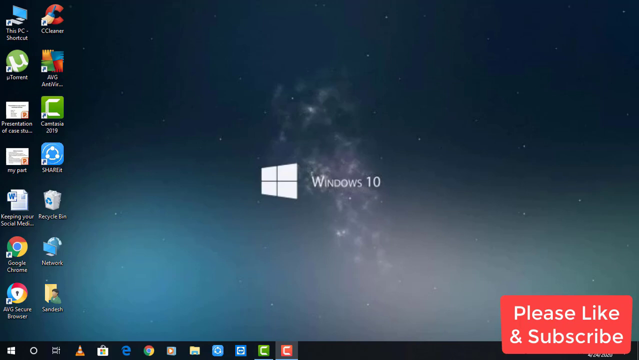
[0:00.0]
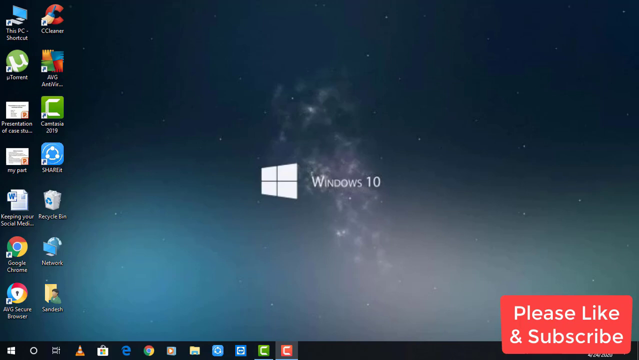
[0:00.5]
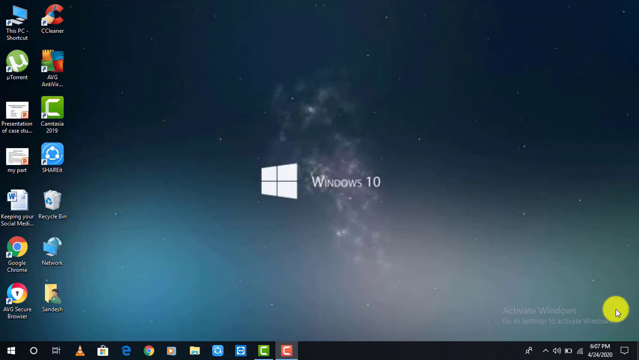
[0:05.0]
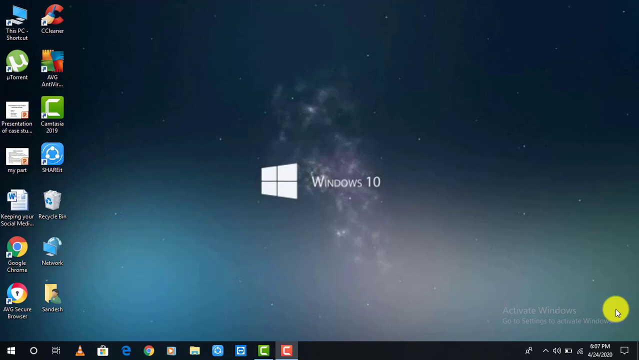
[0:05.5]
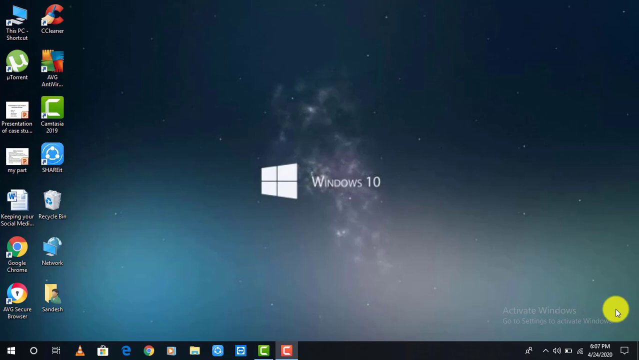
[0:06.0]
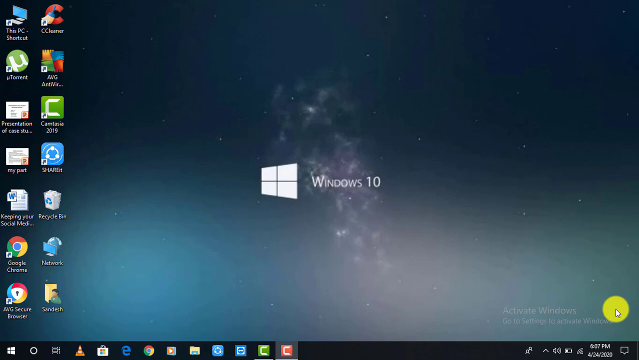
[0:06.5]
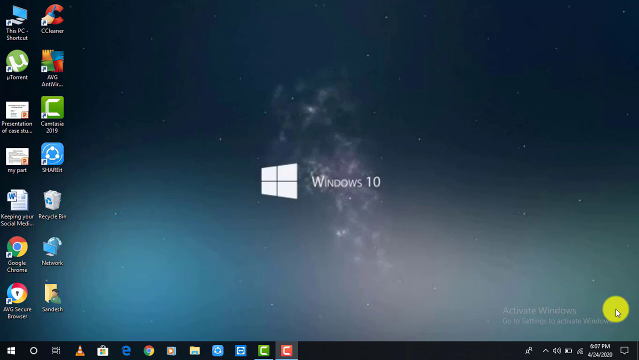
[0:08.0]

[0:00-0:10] It looks like someone is recording their computer screen. The background resembles a galaxy with stars in it, and the Windows 10 logo is on it. Apps are on the left side, and at the bottom right the text reads "please like and subscribe." A black bar along the bottom shows the home button, and Internet Explorer and Google are visible. On the right of the bar are the battery level, the Wi-Fi in use, whether the volume is on, and the time, which appears to be 6.07 PM, 4-24-2020.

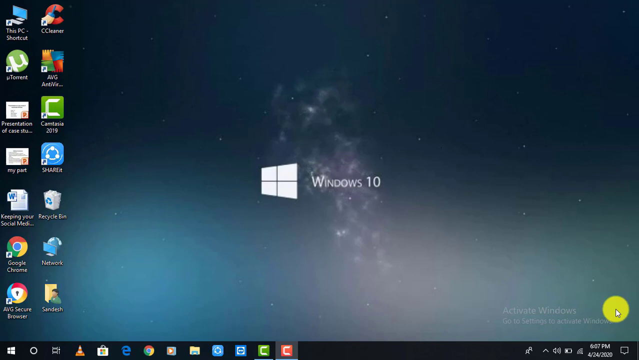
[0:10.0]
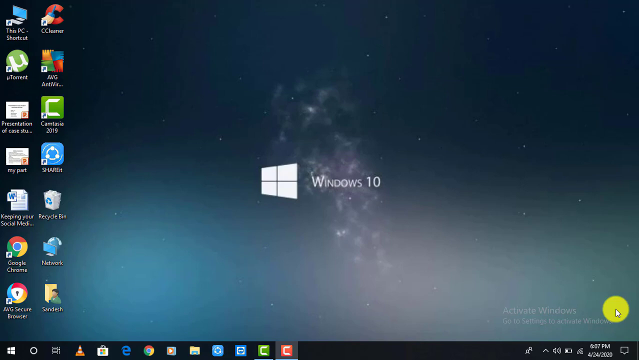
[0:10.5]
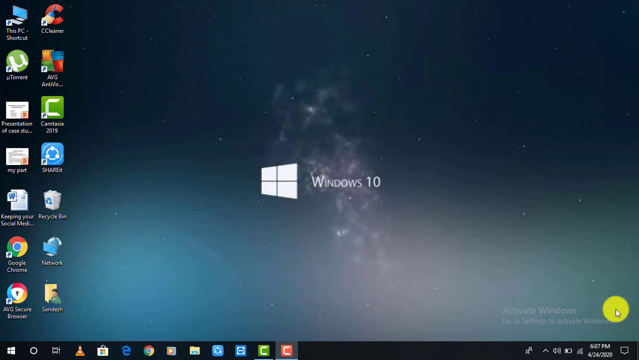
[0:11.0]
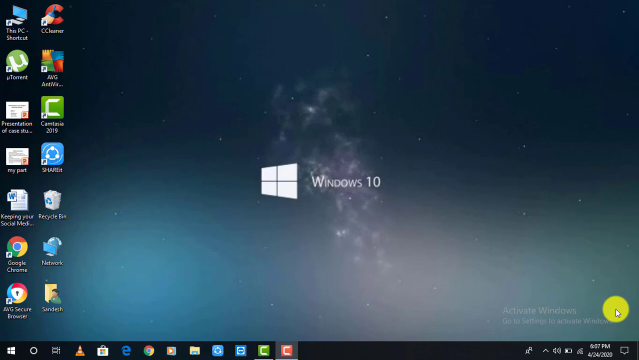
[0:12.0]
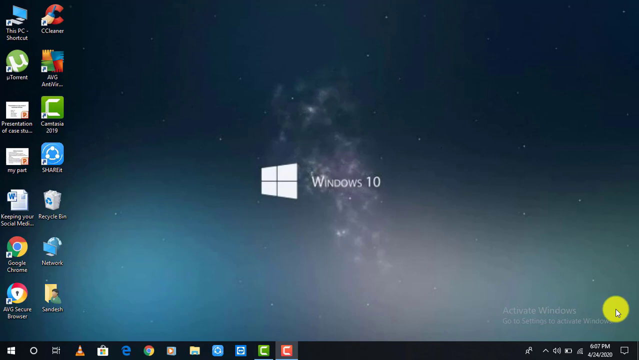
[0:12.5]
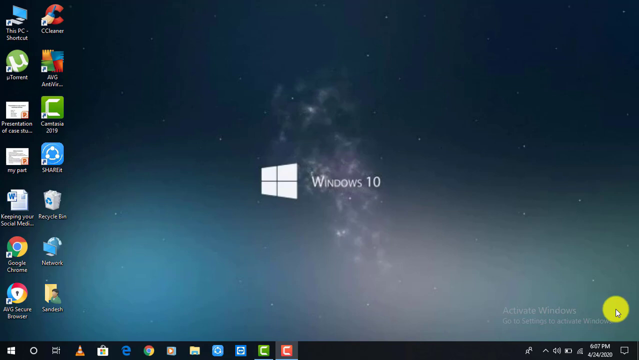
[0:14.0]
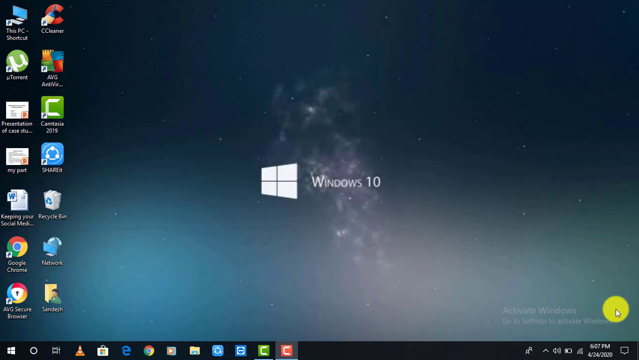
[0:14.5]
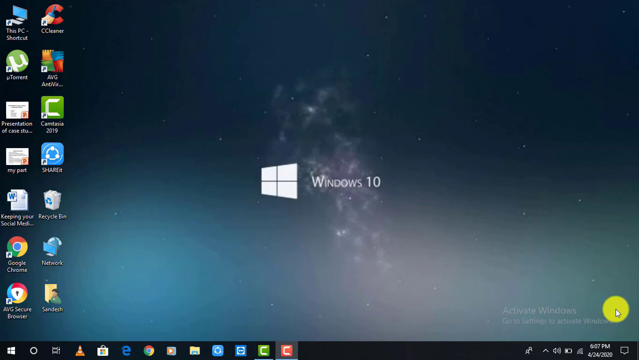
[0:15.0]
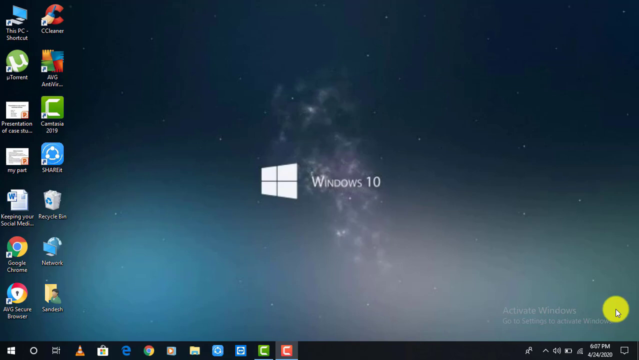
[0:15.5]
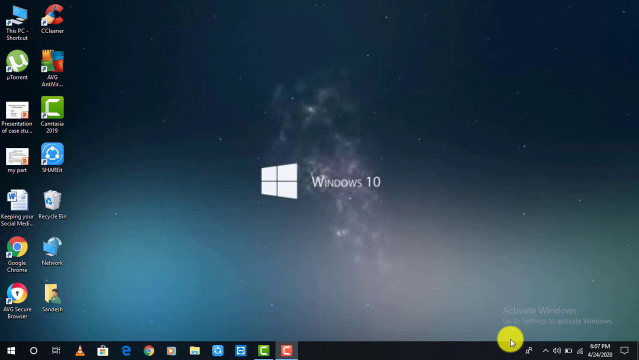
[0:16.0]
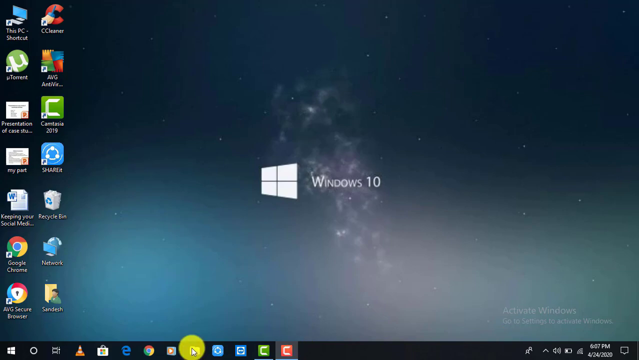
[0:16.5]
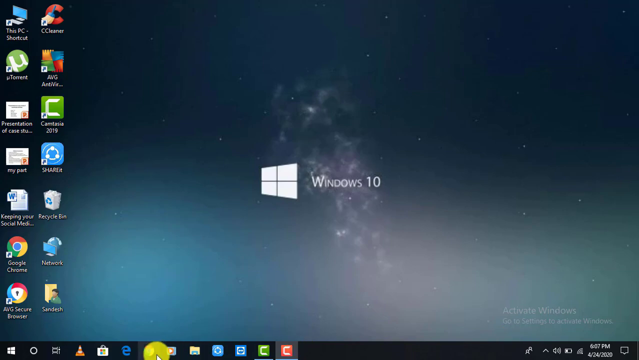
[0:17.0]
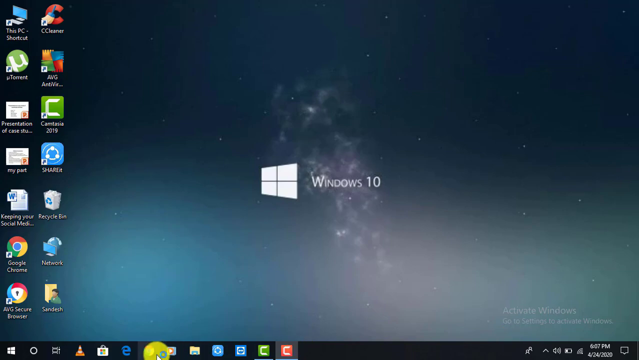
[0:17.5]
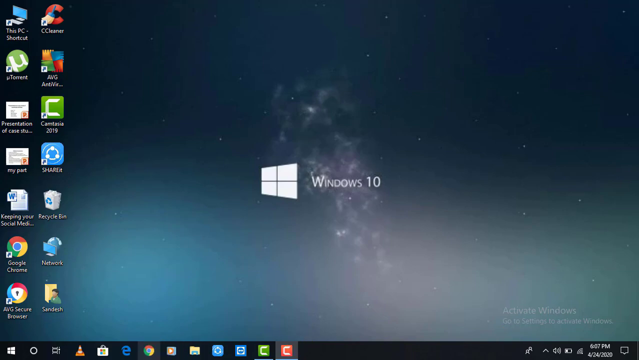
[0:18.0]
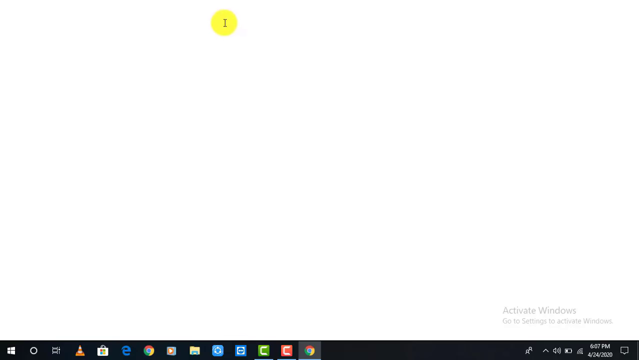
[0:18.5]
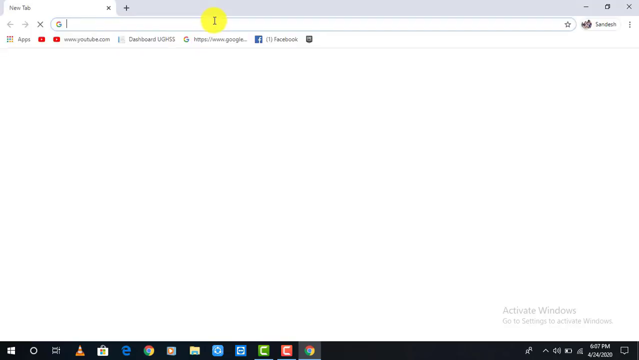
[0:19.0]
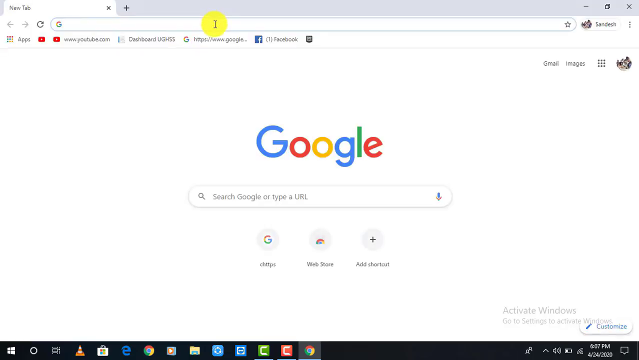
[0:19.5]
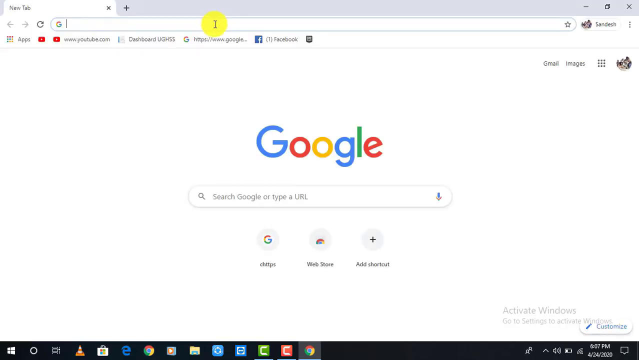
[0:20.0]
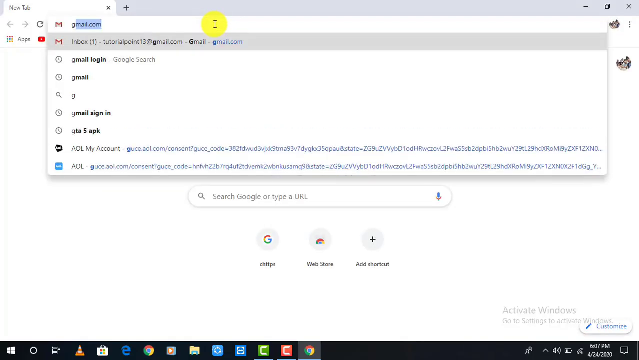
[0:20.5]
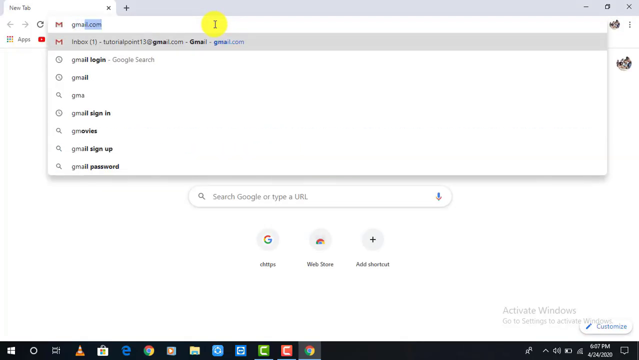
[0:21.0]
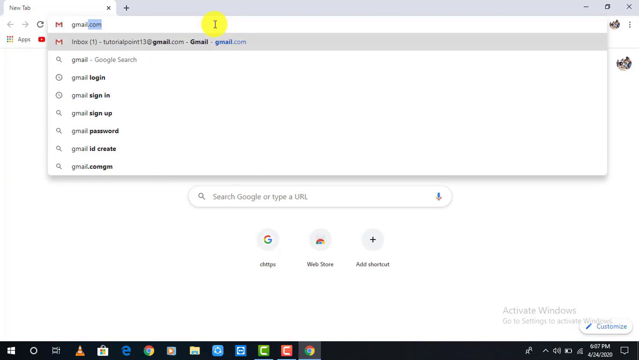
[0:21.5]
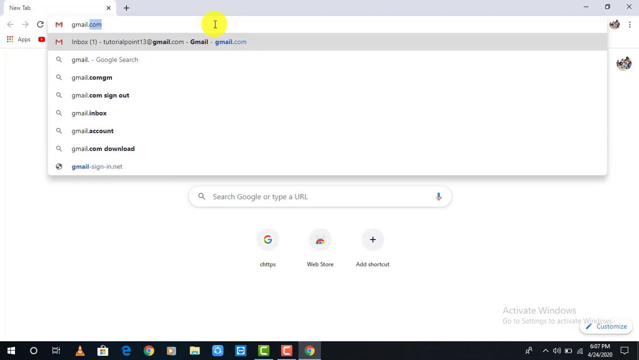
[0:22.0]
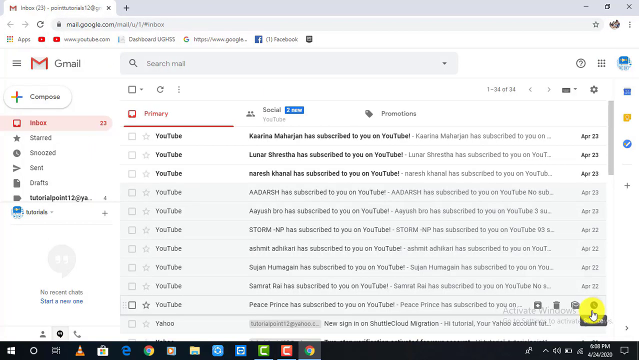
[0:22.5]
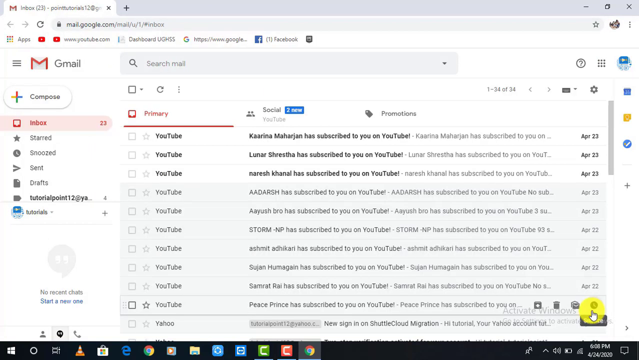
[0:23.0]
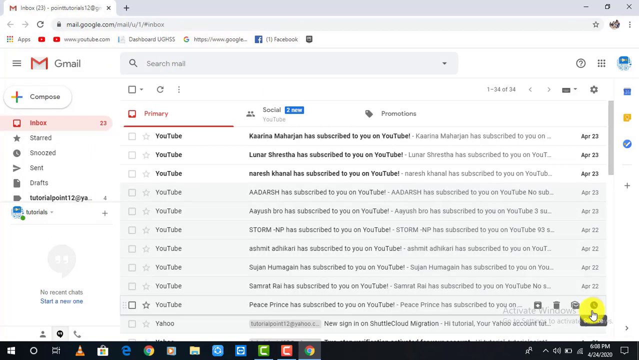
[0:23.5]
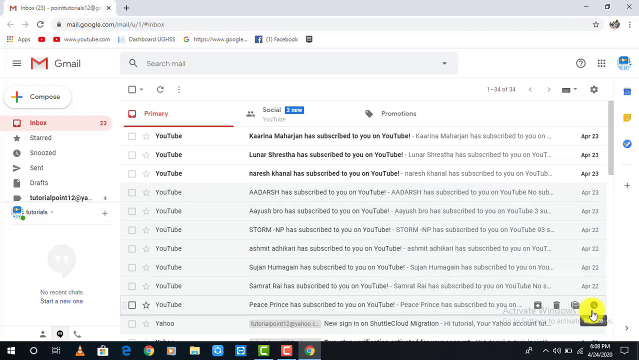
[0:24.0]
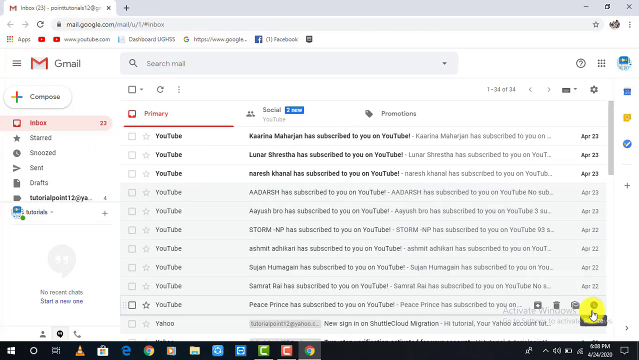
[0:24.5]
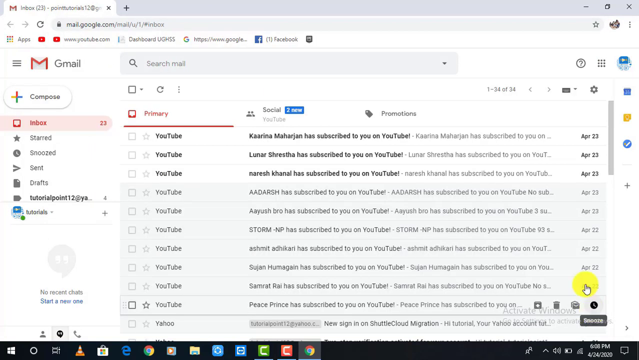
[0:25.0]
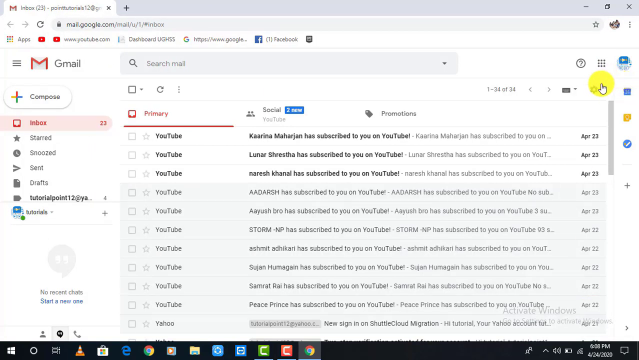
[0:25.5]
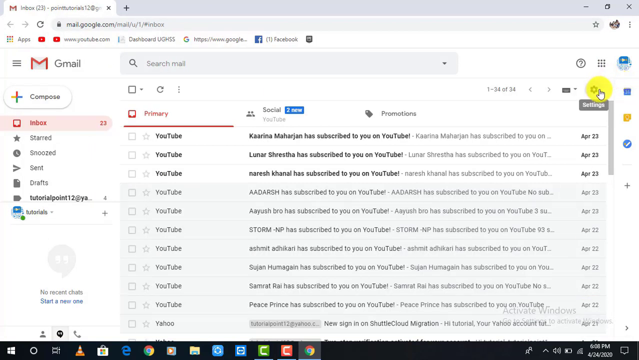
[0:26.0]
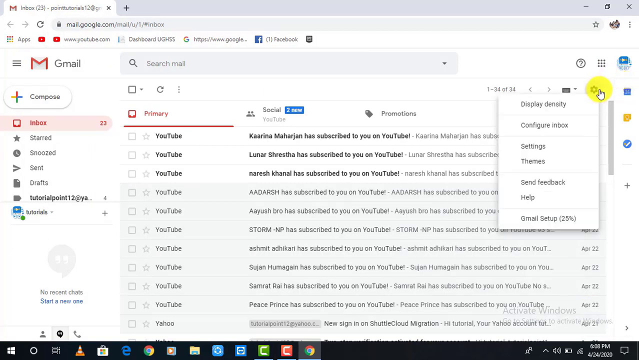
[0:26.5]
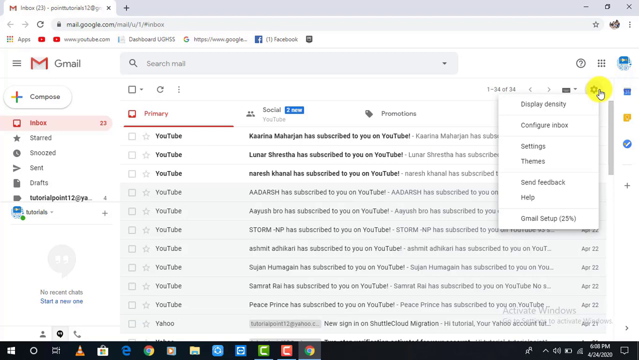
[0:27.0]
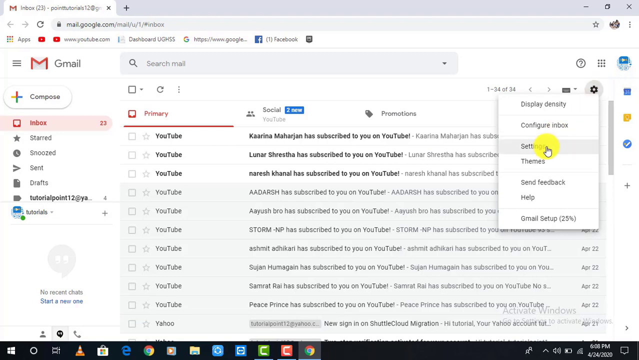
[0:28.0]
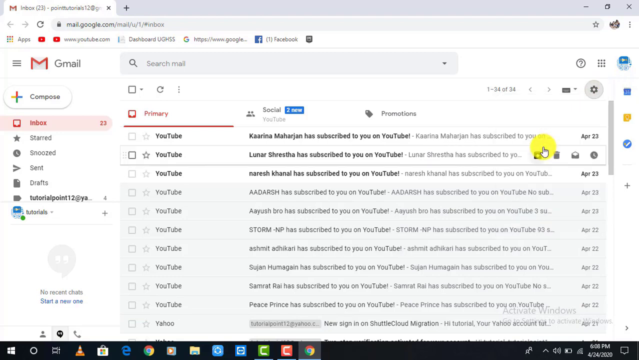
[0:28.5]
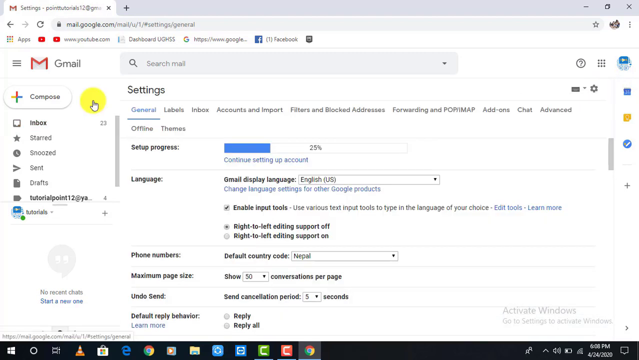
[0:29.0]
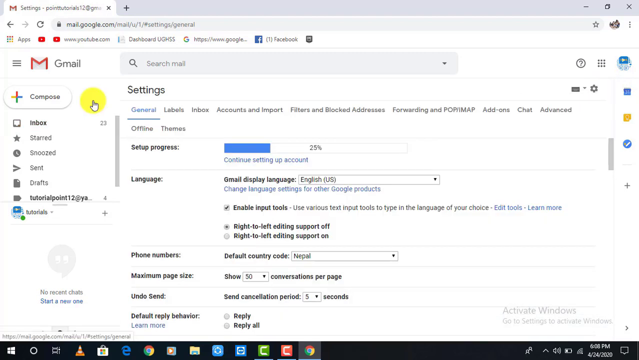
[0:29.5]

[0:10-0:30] The recording of the home screen continues. A number of apps are on the left side of the screen: the PC shortcut, CC Cleaner, the Recycle Bin, a Word document, Google Chrome, Network, AWG, and Secure Browser. A yellow dot is dragged around the bottom of the screen, and then Google Chrome opens; the yellow dot has the cursor in it. The user clicks into the search field, types gmail.com, and Gmail appears, showing three new messages from YouTube. The inbox is organized into Primary, Social, and Promotions, with Primary selected, and there appear to be 23 new messages altogether. The yellow dot, now with a small hand in it, clicks the settings button, and a menu of options appears: Display Density, Configure Inbox, Settings, Theme, Send Feedback, Help, and Gmail Setup 25%.